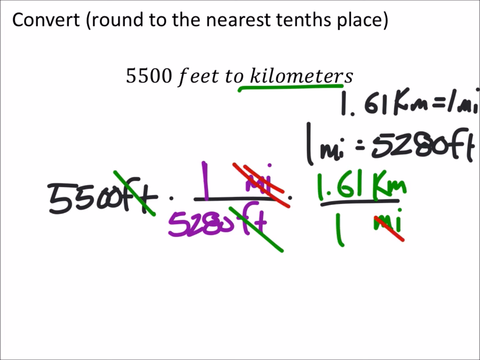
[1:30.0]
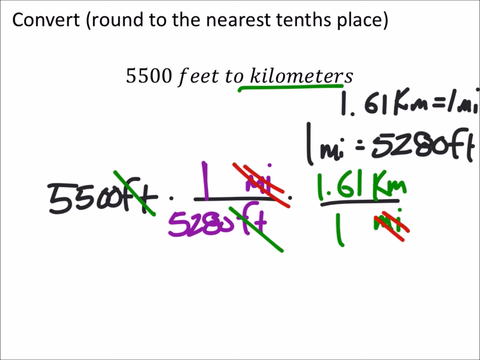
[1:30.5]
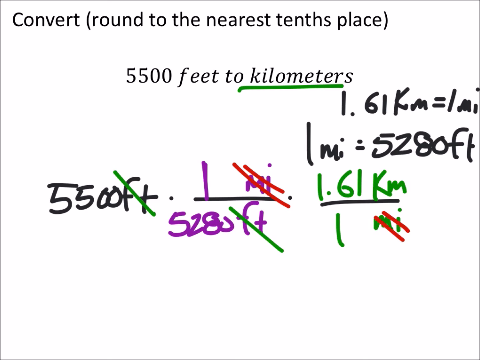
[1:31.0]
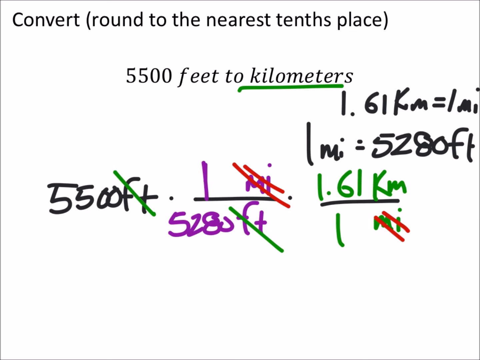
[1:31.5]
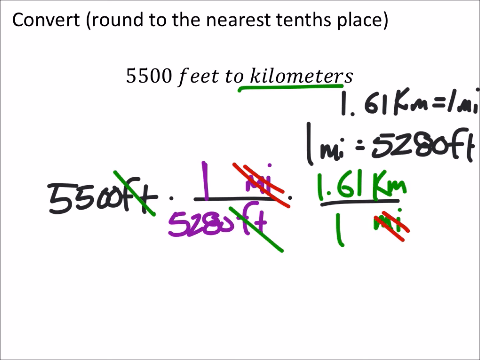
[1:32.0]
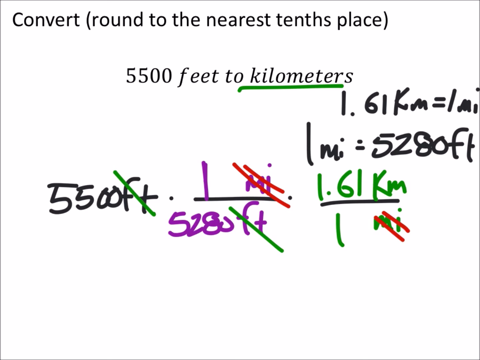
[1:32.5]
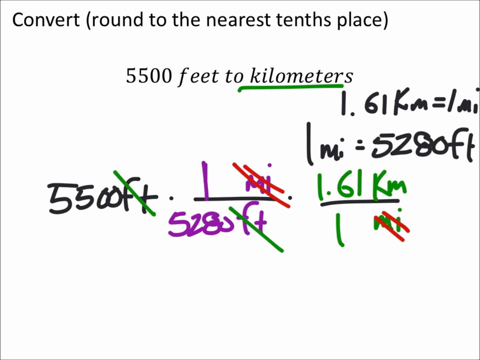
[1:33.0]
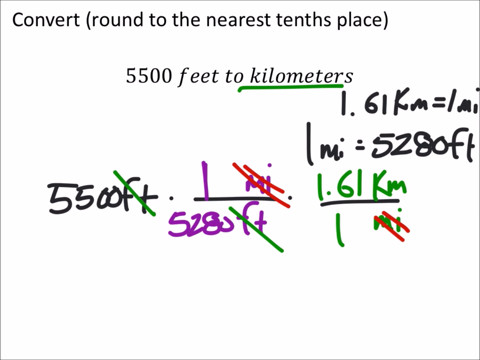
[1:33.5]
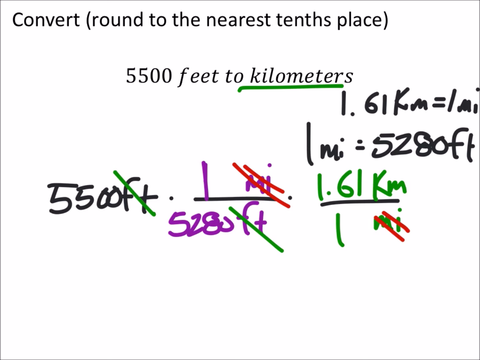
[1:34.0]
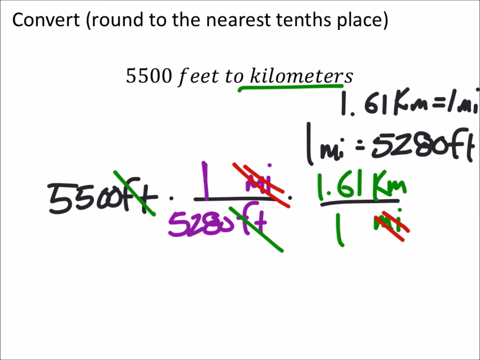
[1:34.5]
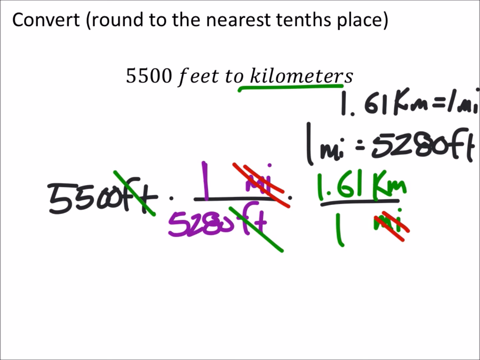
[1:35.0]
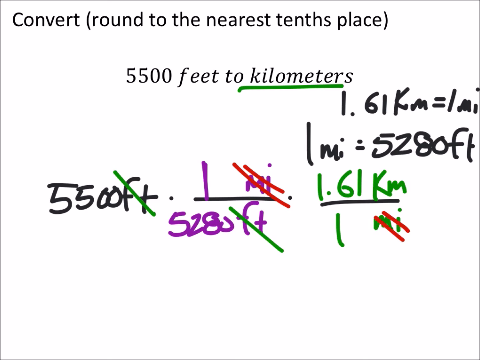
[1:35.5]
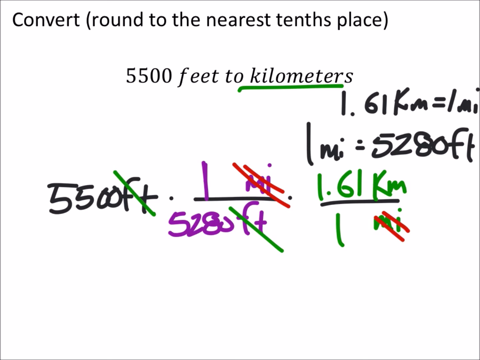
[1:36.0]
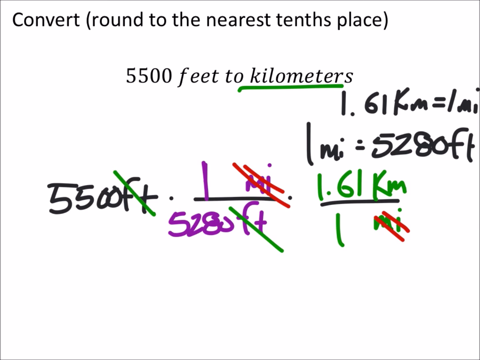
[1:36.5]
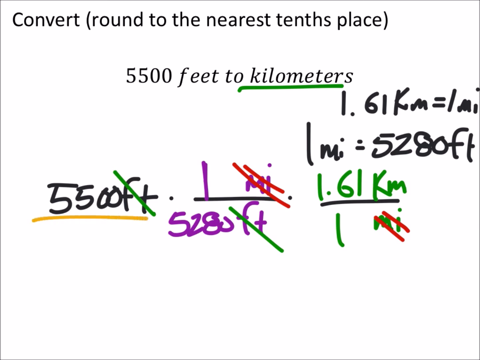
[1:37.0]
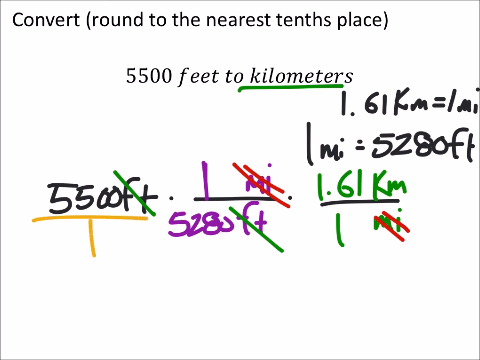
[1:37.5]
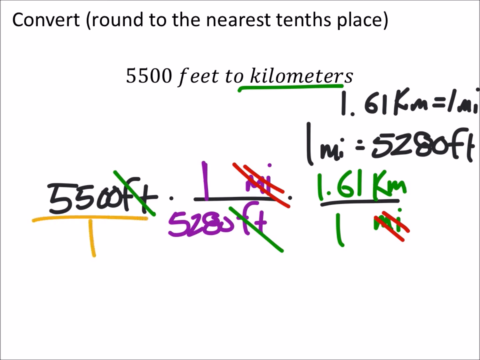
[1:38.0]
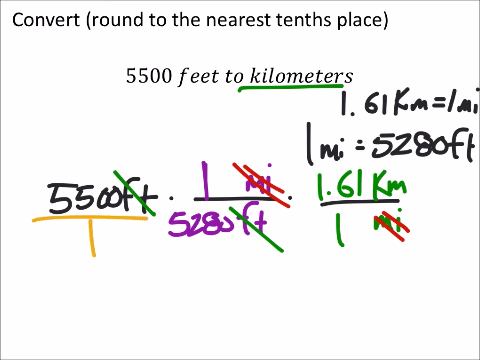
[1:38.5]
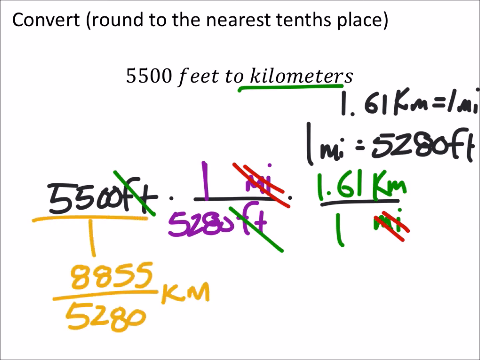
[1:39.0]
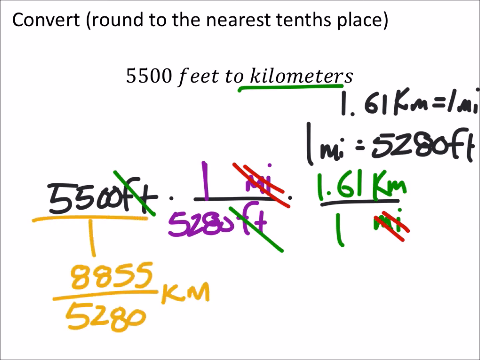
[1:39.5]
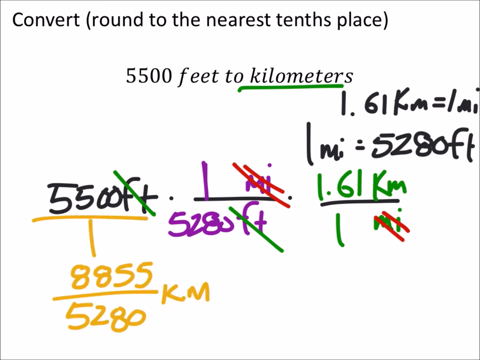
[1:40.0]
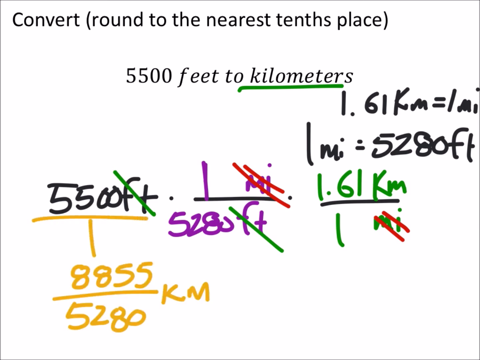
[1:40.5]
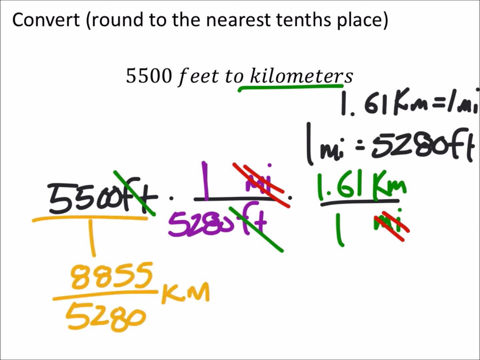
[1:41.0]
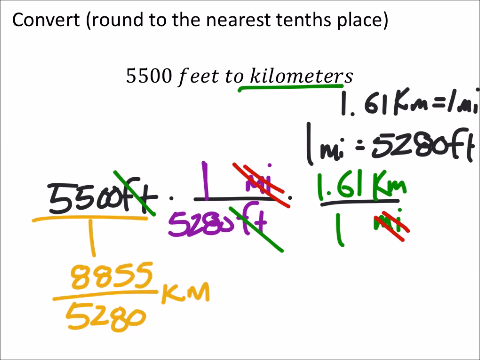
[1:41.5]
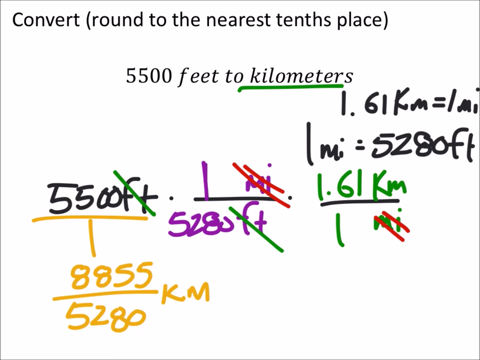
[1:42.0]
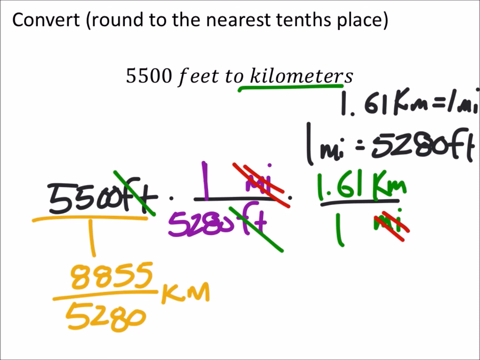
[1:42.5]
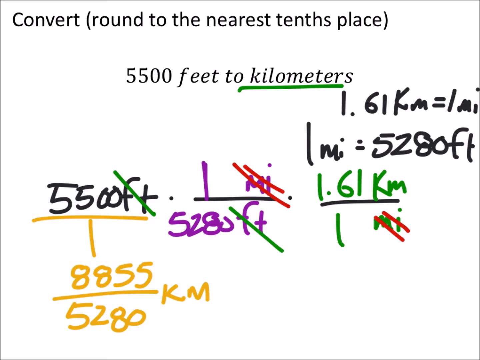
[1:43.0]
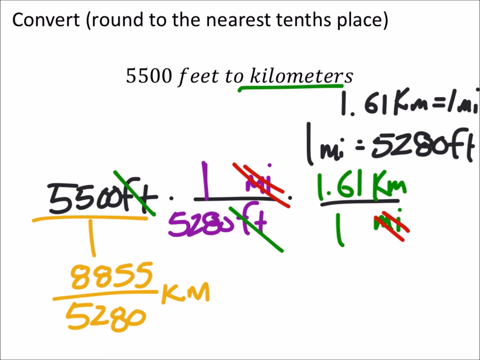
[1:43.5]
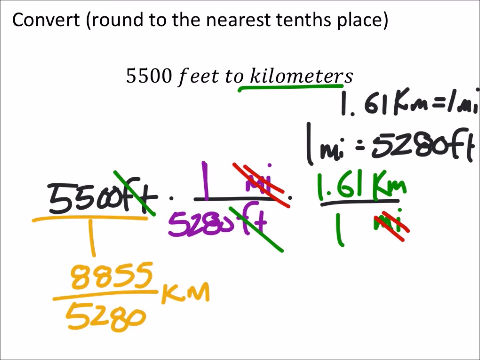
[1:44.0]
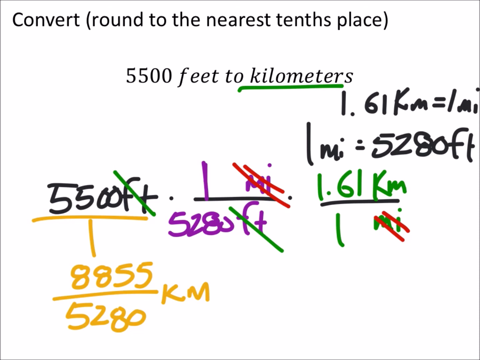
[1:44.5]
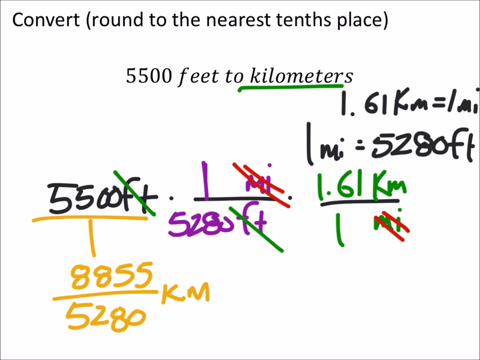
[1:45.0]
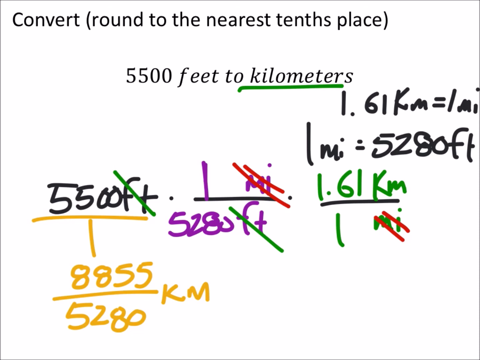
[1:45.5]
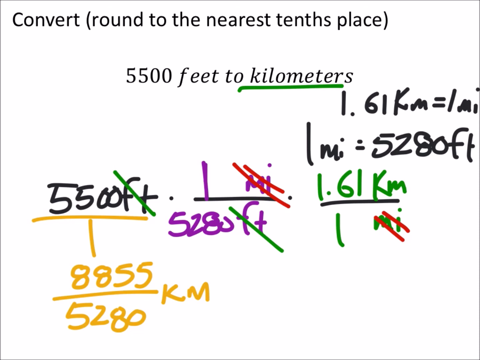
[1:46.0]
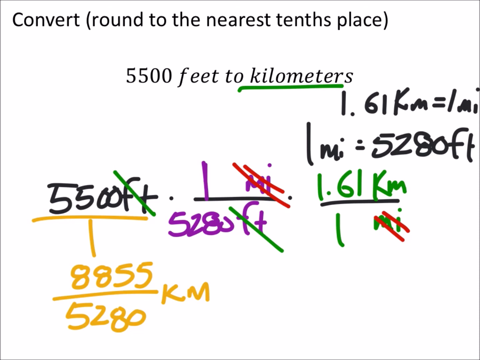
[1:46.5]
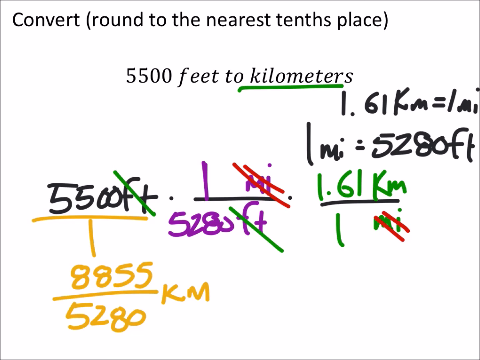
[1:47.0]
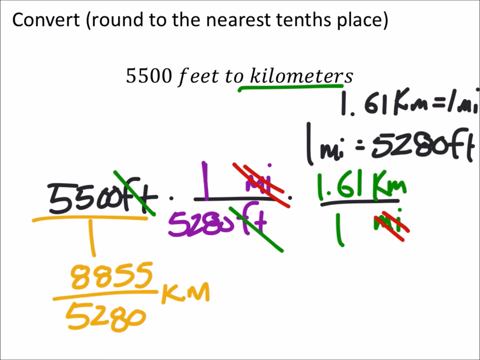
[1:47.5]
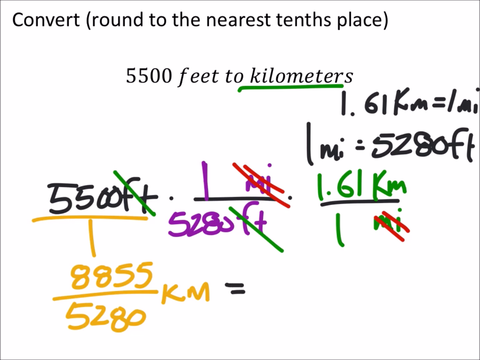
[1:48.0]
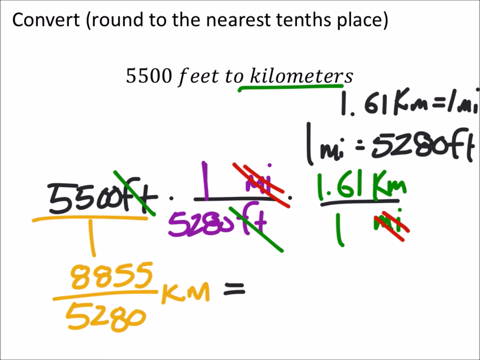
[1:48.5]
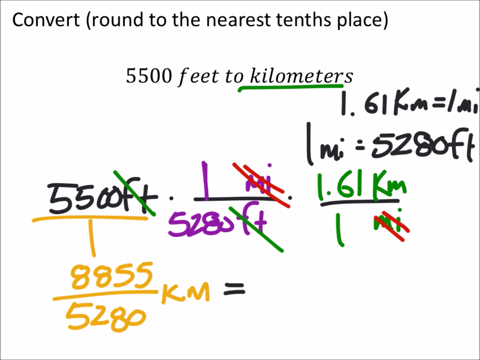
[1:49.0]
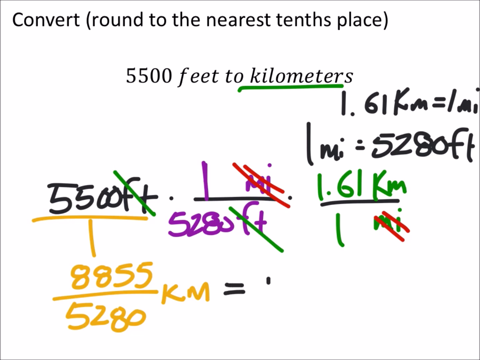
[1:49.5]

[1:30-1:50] The problem, to convert 5,500 feet to kilometers and round to the nearest tenth, is shown with 1.61 kilometers and 5,280 feet. A table is drawn under the 5,500 feet, and under the table there is 8,855 km divided by 5,280 km. The division of 8,855 km by 5,280 km is being carried out.